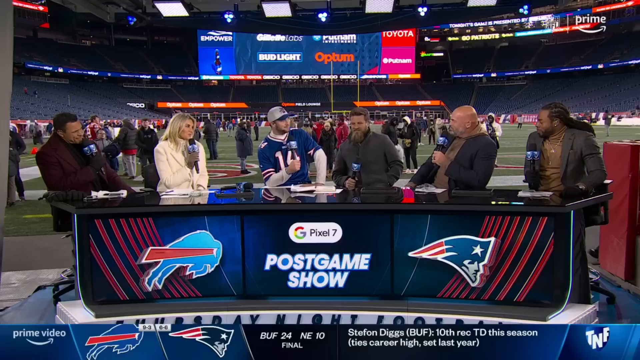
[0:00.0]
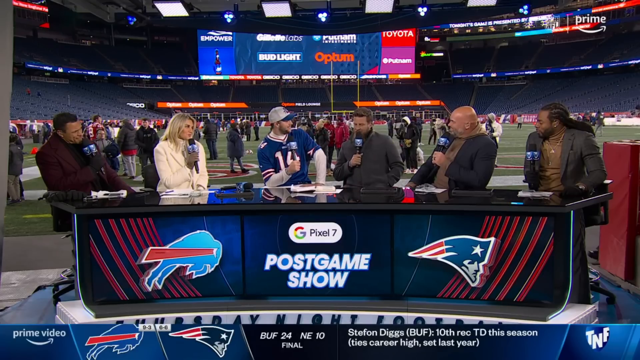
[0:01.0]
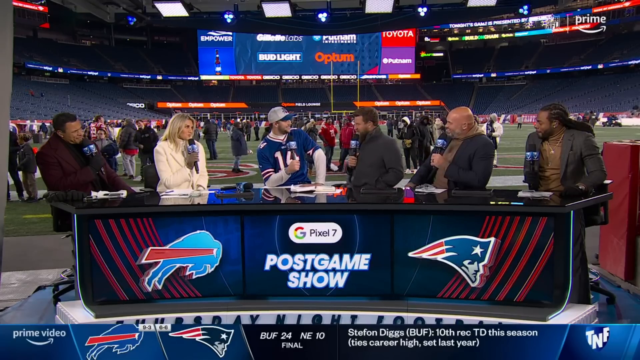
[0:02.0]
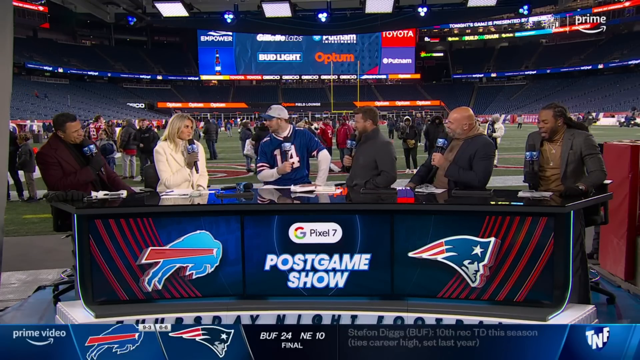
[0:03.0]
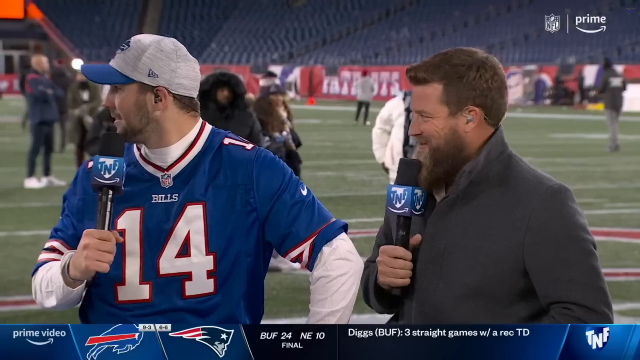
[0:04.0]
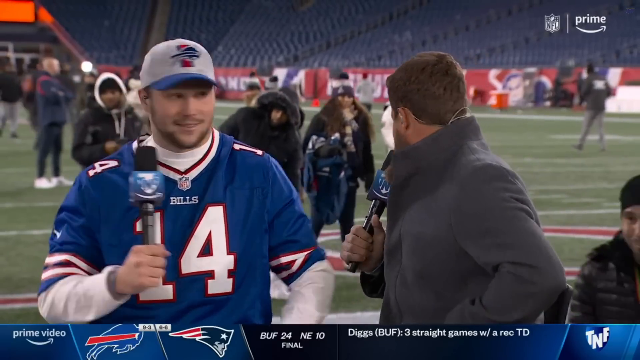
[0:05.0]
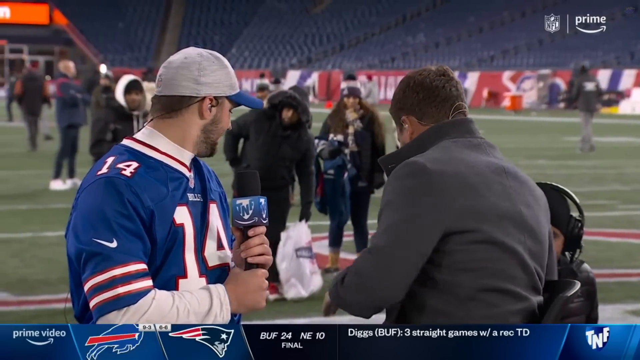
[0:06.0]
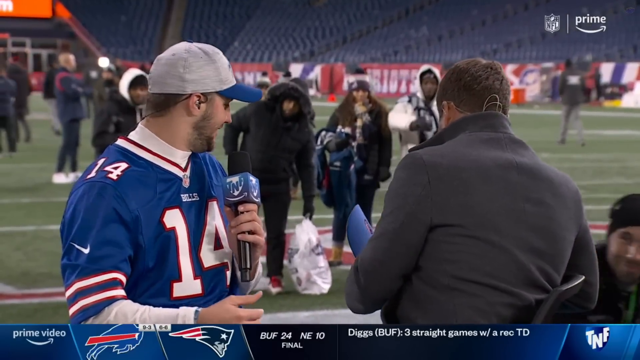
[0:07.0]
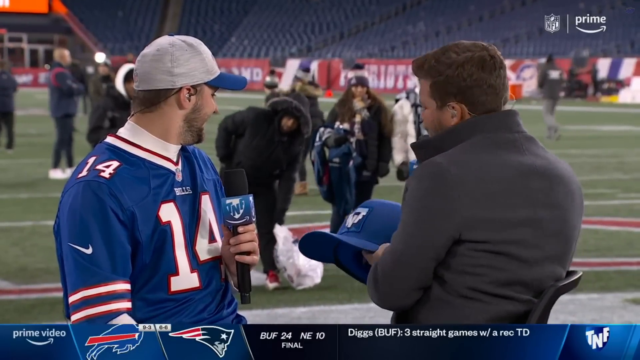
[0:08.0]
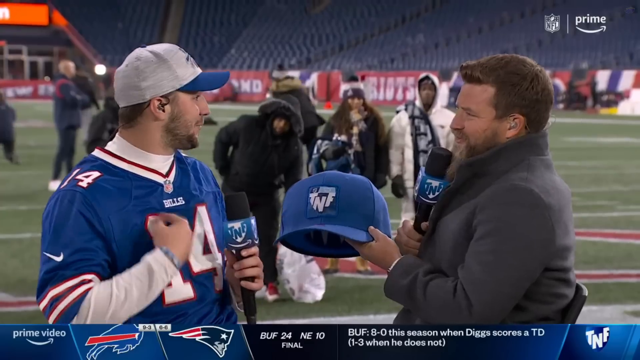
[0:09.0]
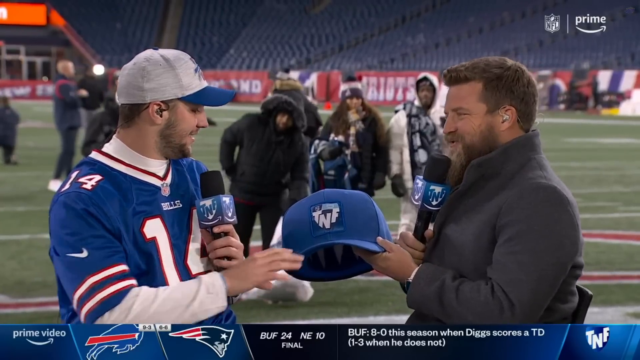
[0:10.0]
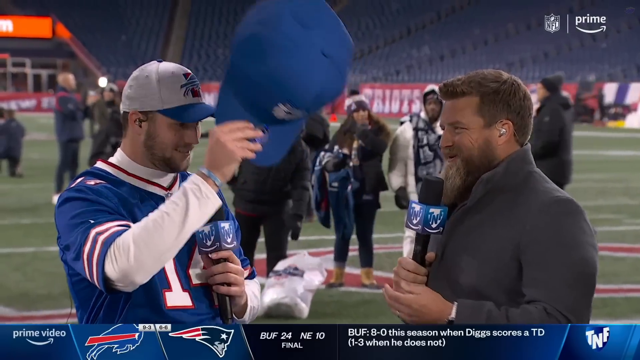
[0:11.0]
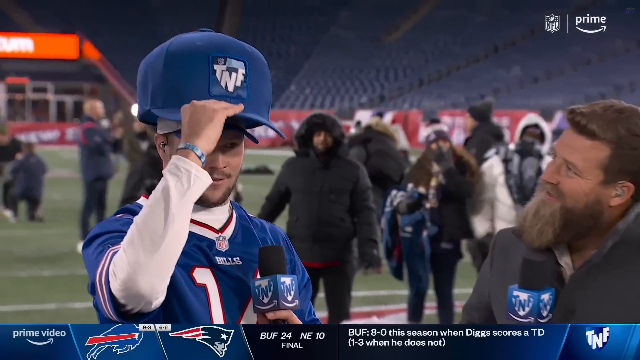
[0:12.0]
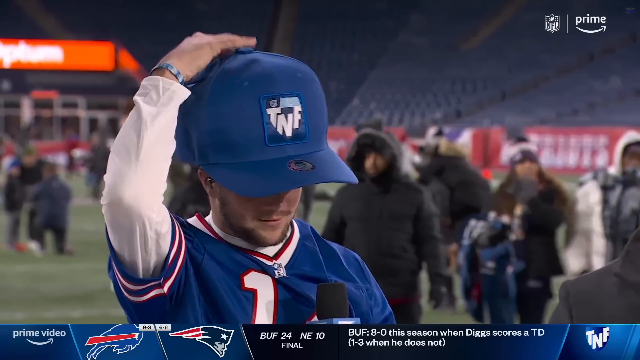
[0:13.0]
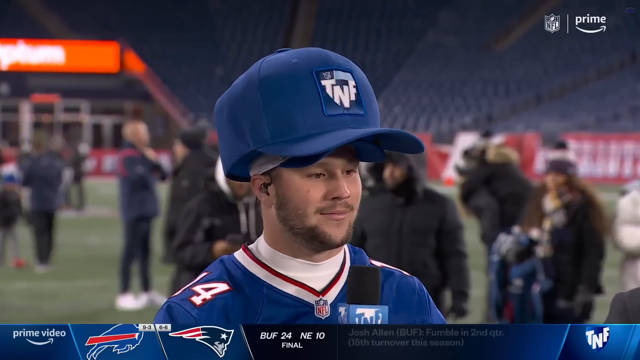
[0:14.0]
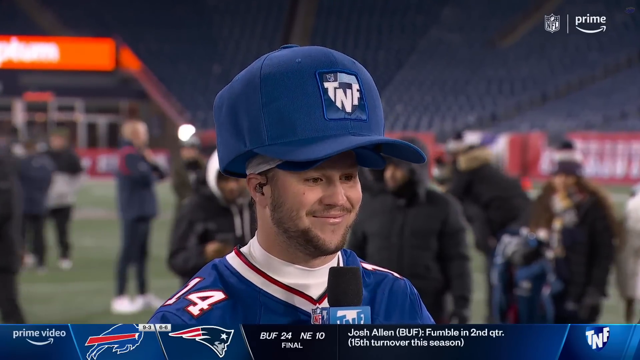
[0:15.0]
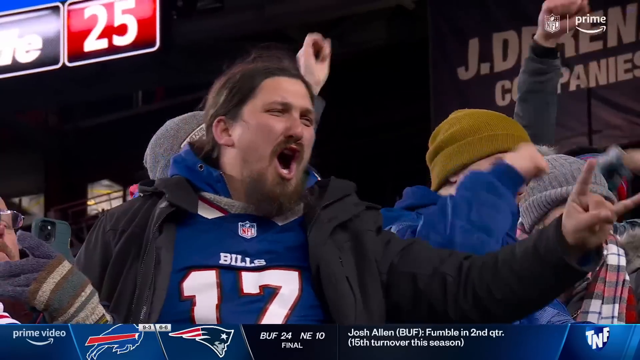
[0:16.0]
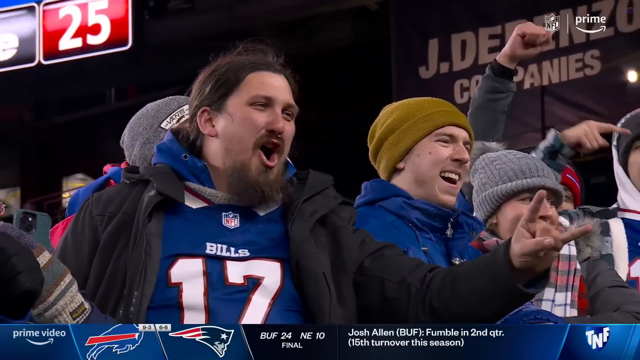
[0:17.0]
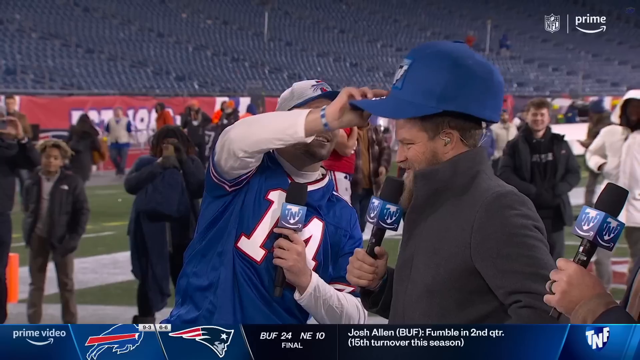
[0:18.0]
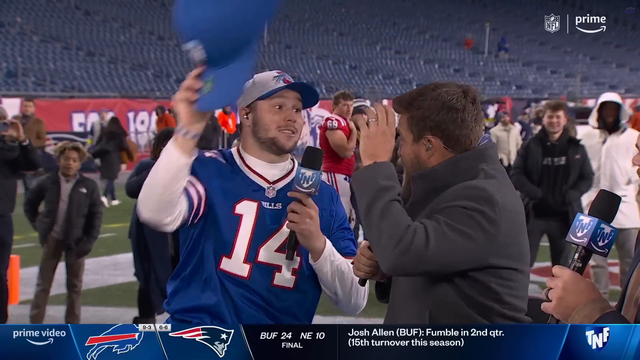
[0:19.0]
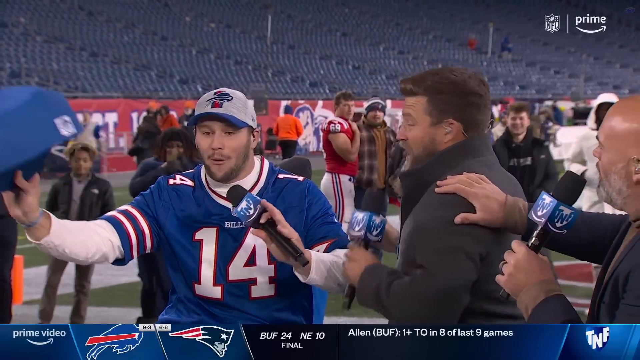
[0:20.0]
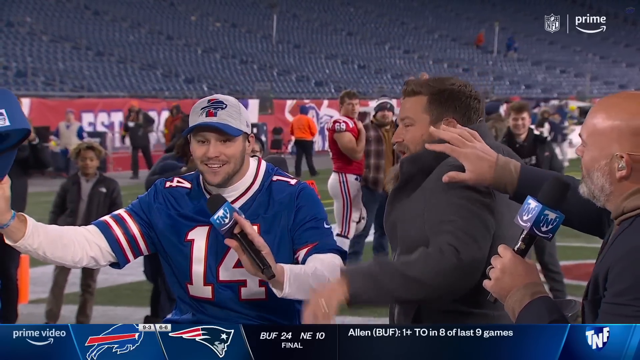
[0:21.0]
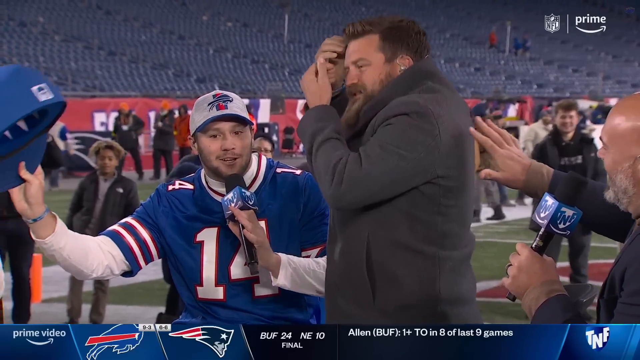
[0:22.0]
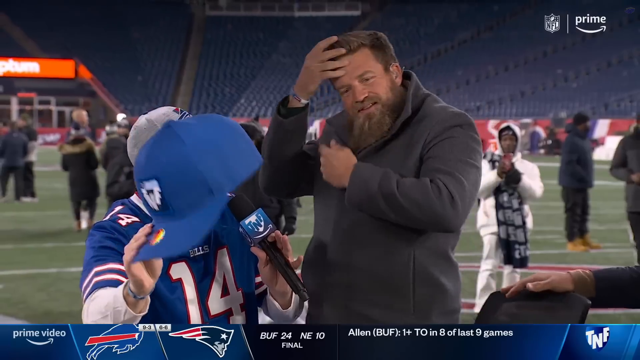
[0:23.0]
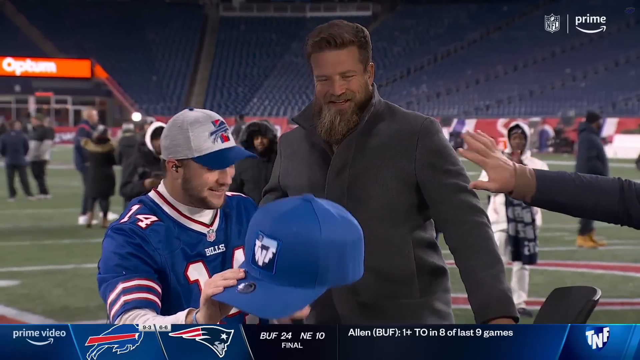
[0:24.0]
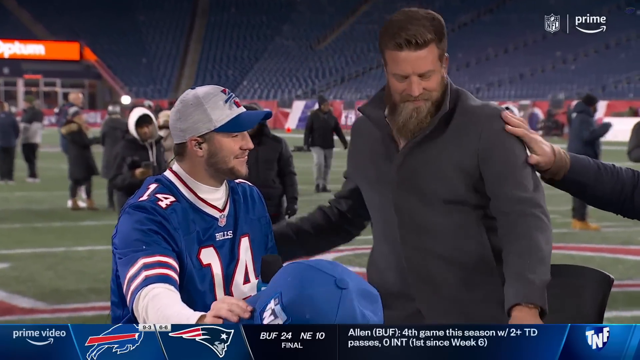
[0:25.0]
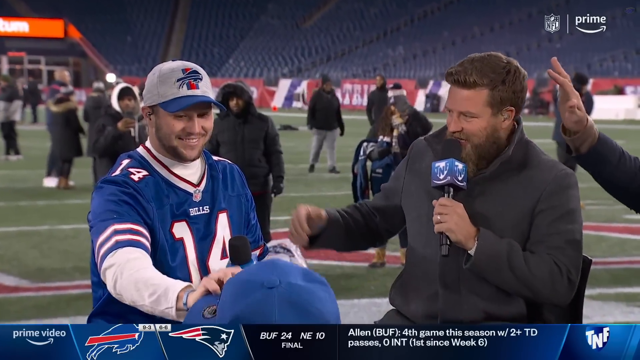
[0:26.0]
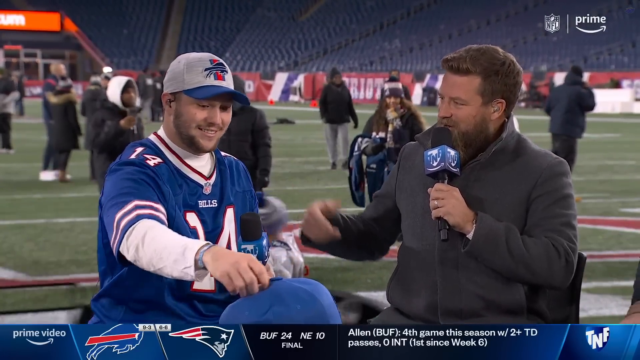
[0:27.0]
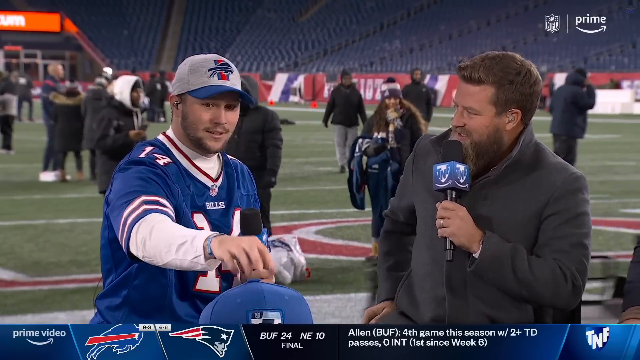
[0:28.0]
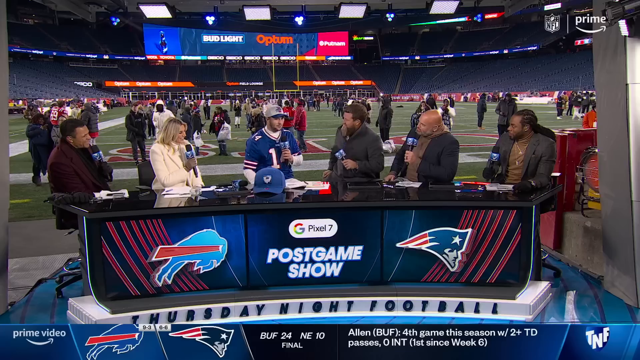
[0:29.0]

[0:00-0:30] A post-game show takes place inside a stadium, with the news desk brought in and placed inside the stadium. There appear to be five news anchors. In the middle of the desk sits a man who was a player in the game; he wears a blue, red and white jersey with the number 14 on it. He holds a microphone and speaks to the people conducting the interview. On the left side of the frame is a man with dark hair in a burgundy overcoat, holding a microphone. Next to him is a blonde woman in a beige overcoat and taupe gloves, also holding a microphone. The NFL player sits in the middle of the post-game show desk. Next to him is another interviewer with salt-and-pepper hair and a gray jacket, holding a black and blue microphone. Beside him is a bald interviewer in a gray jacket holding a microphone. On the right end is another host with braids in his hair, wearing a gray sports jacket over a brown shirt.